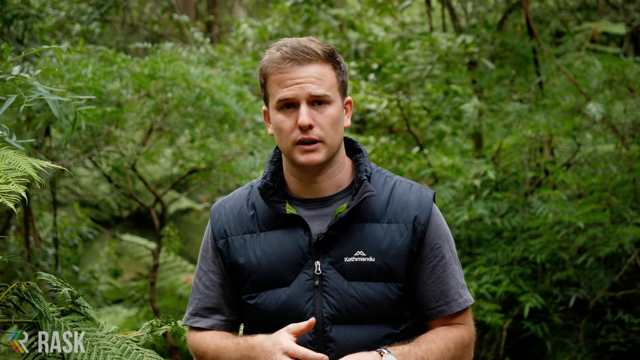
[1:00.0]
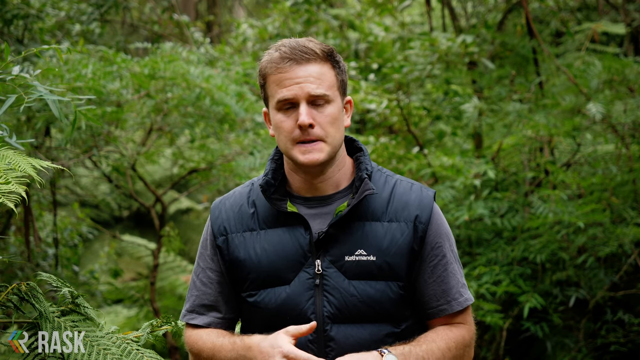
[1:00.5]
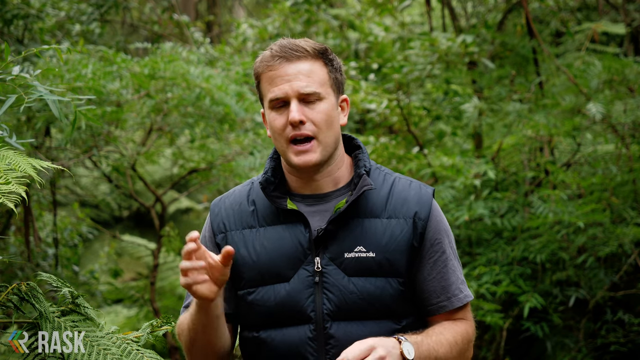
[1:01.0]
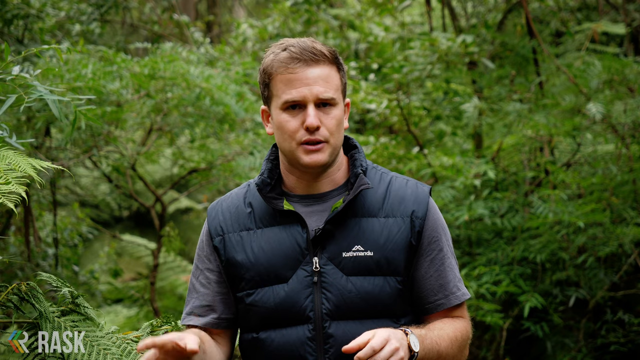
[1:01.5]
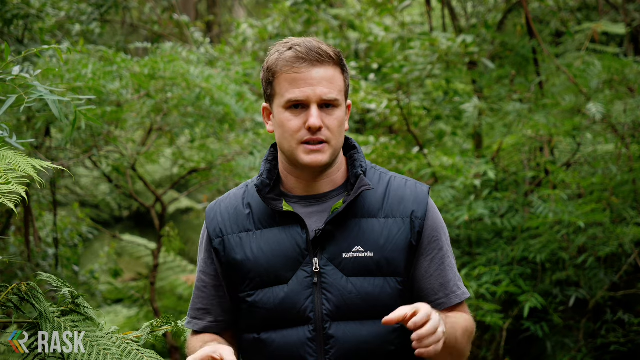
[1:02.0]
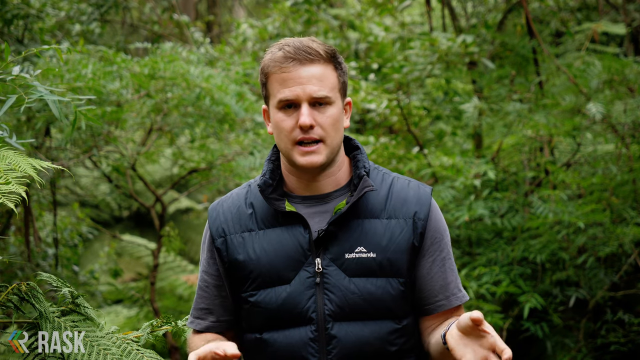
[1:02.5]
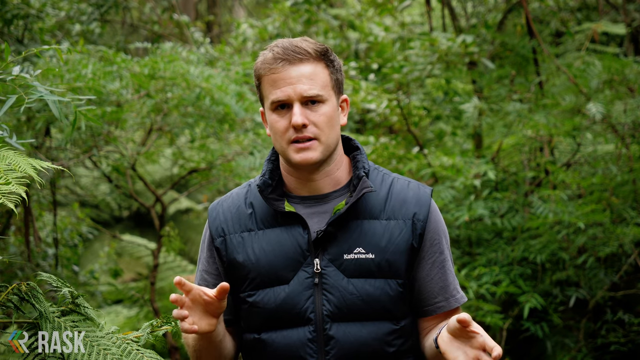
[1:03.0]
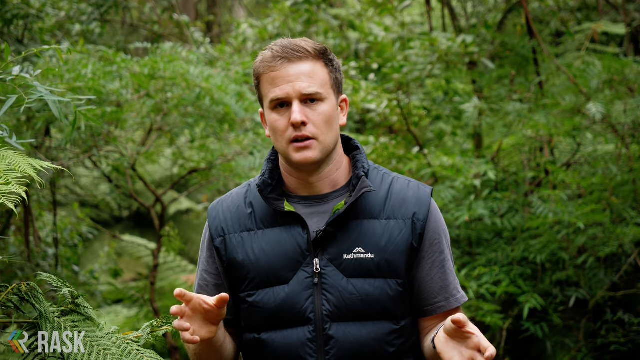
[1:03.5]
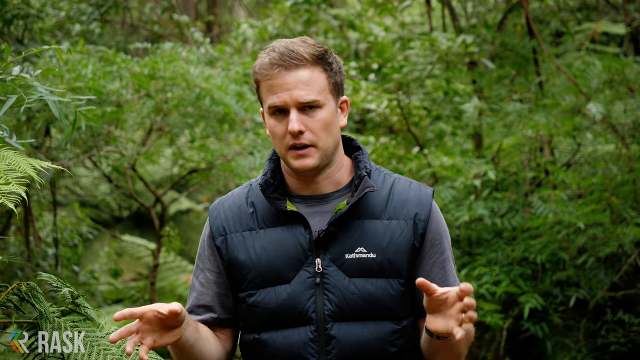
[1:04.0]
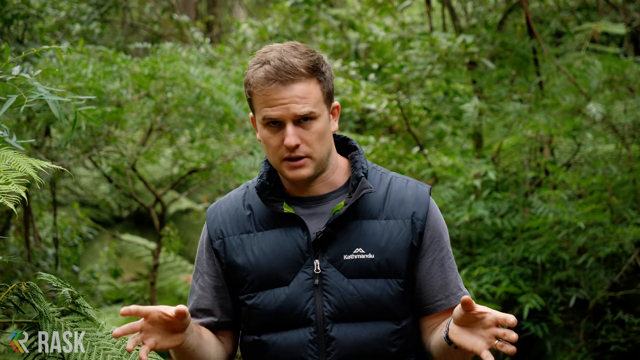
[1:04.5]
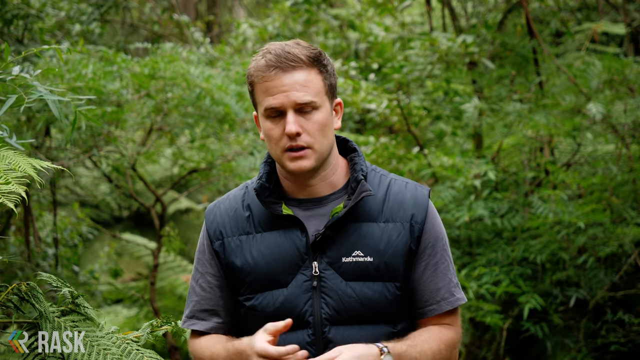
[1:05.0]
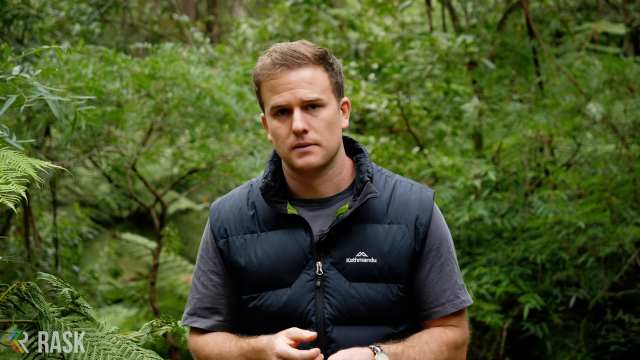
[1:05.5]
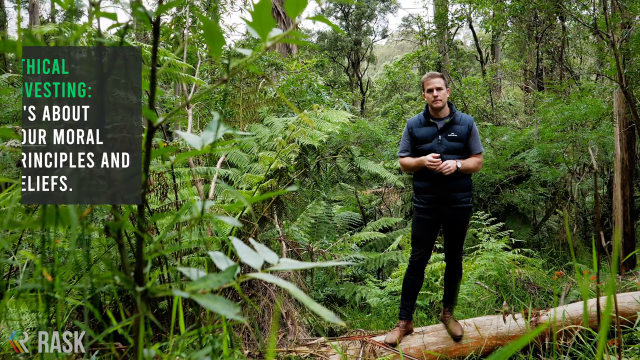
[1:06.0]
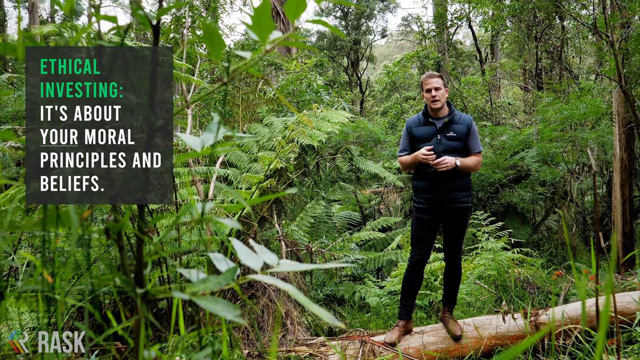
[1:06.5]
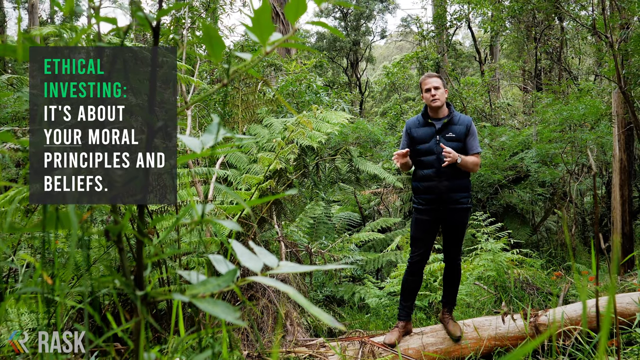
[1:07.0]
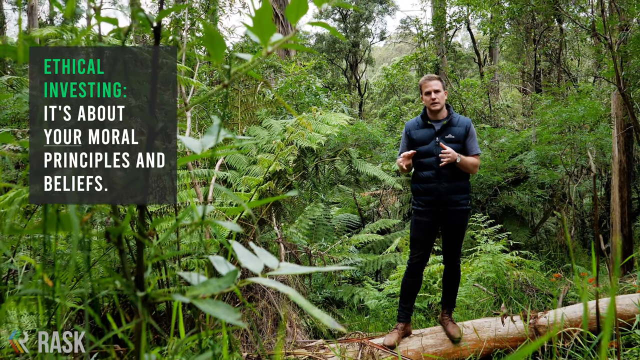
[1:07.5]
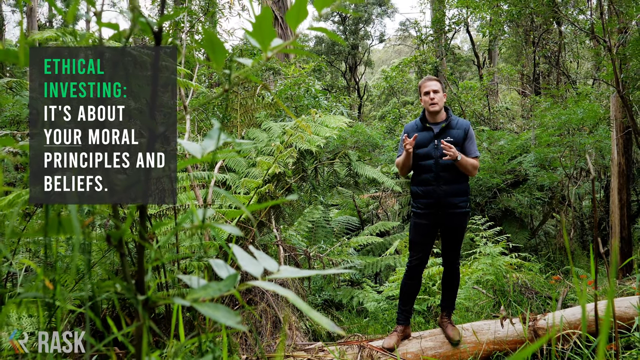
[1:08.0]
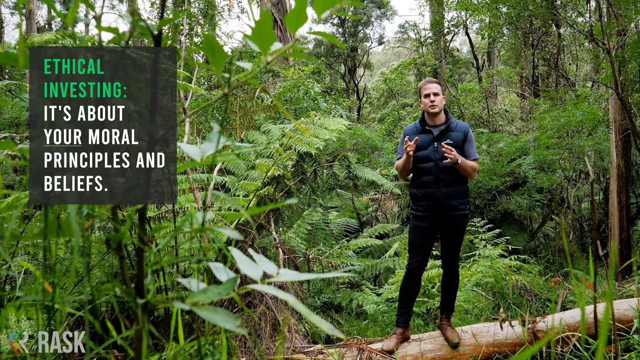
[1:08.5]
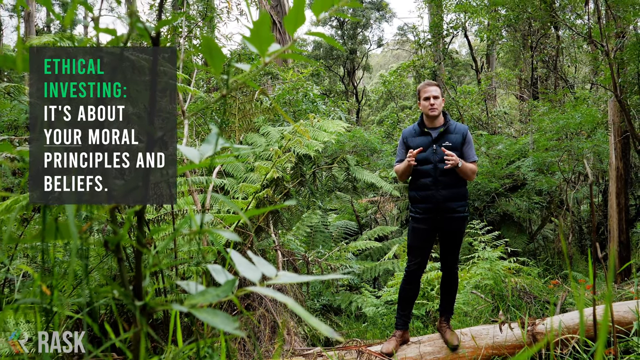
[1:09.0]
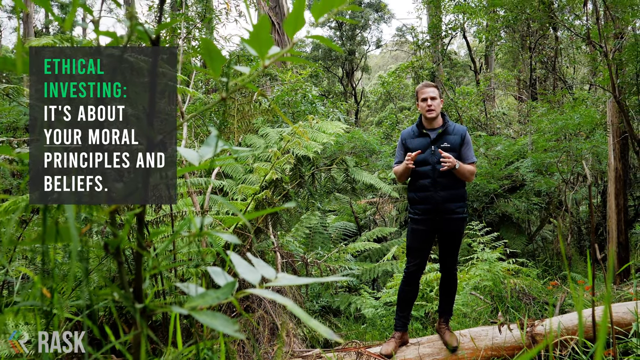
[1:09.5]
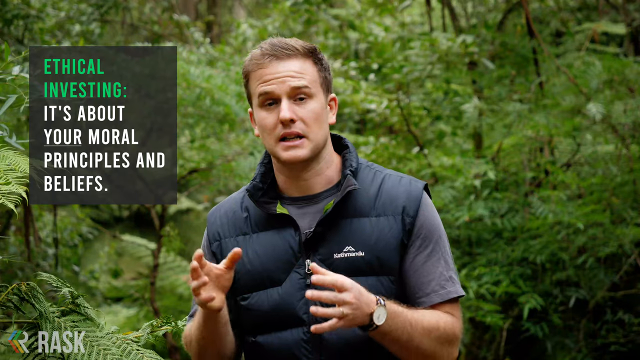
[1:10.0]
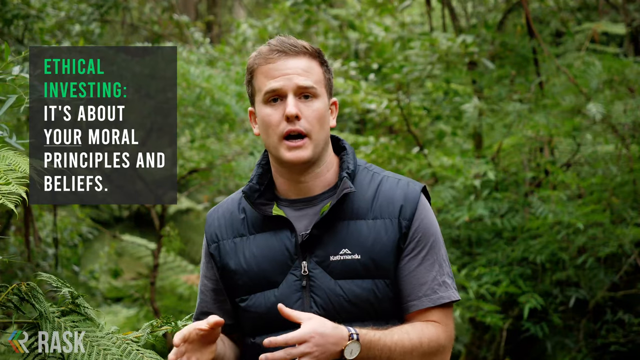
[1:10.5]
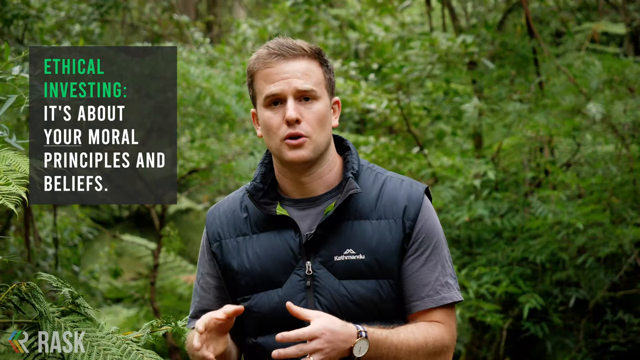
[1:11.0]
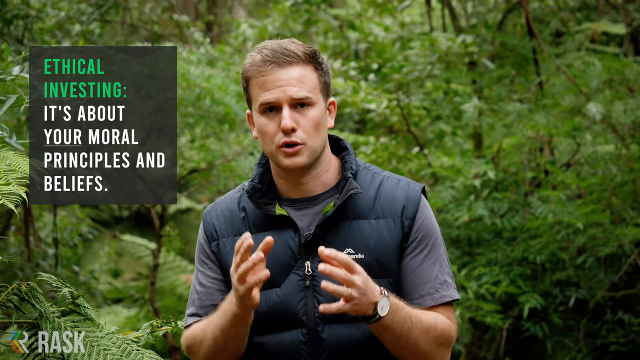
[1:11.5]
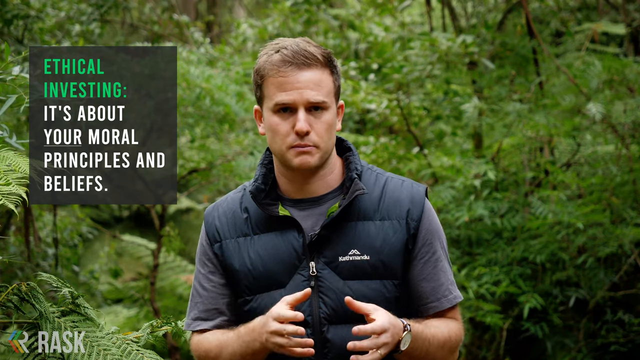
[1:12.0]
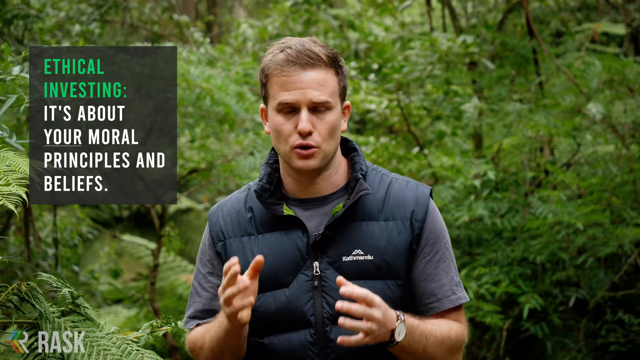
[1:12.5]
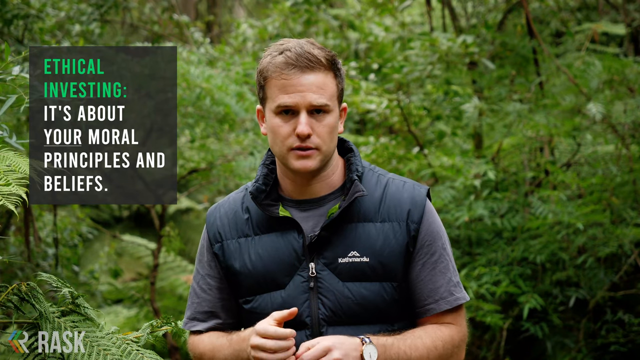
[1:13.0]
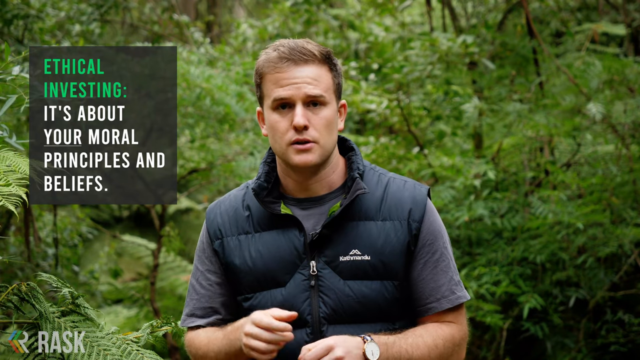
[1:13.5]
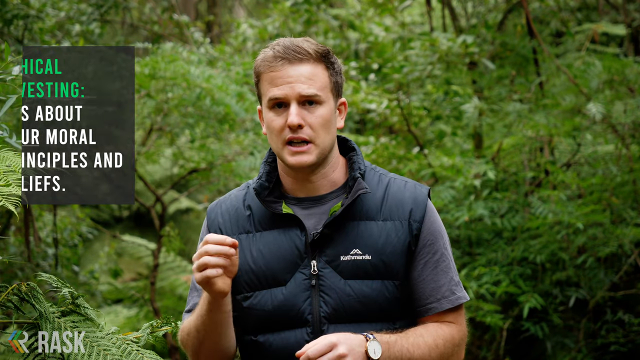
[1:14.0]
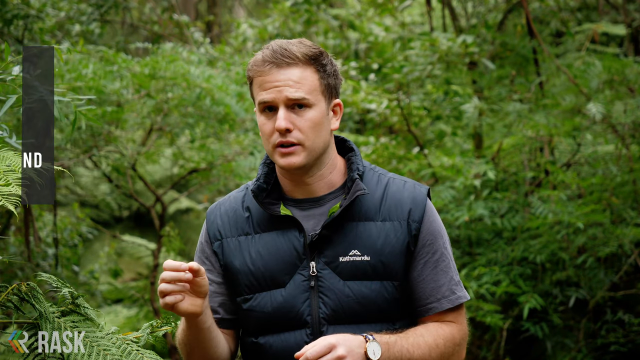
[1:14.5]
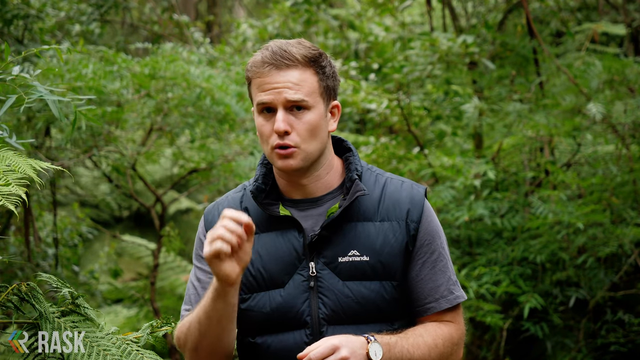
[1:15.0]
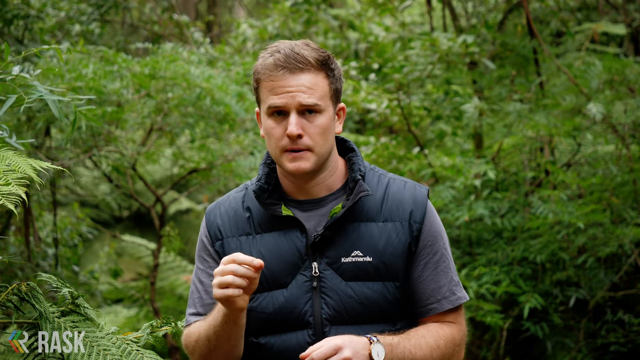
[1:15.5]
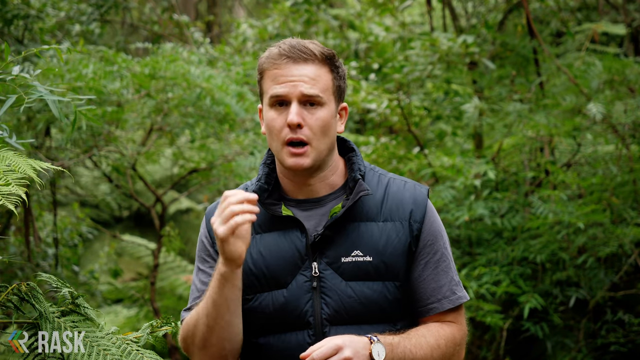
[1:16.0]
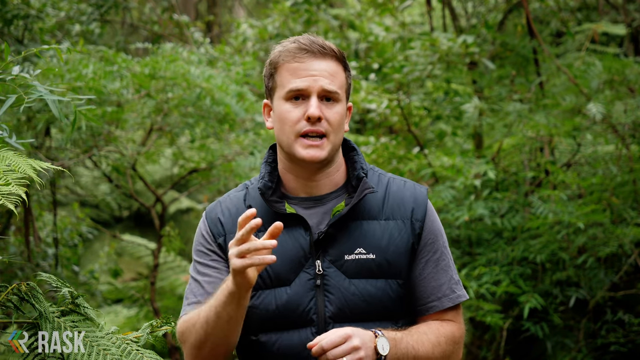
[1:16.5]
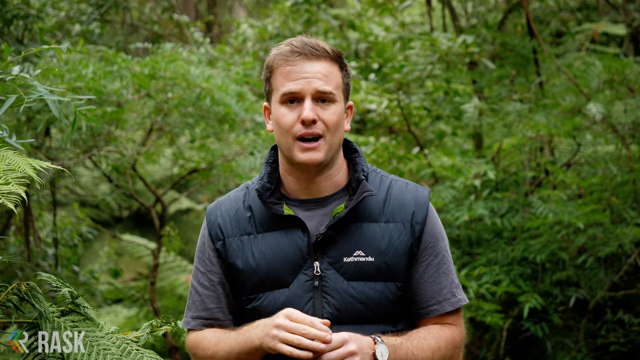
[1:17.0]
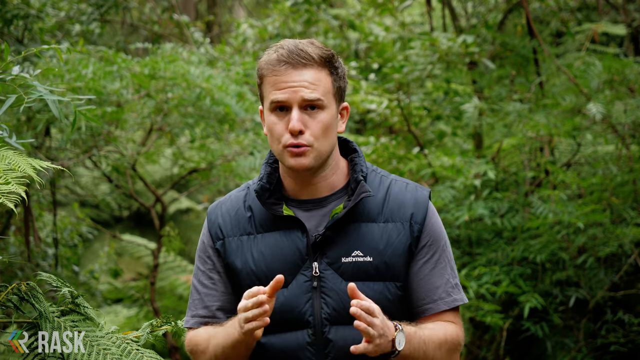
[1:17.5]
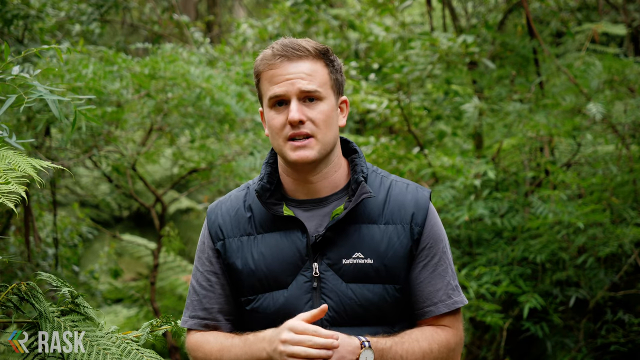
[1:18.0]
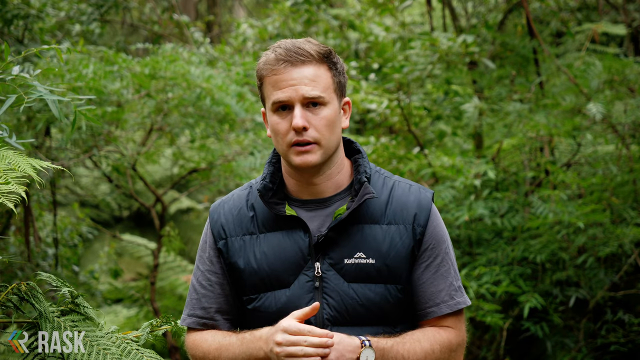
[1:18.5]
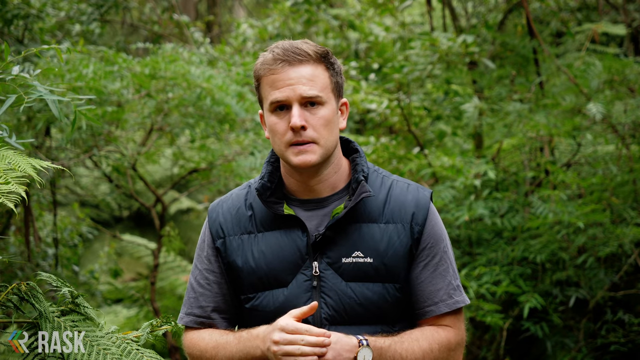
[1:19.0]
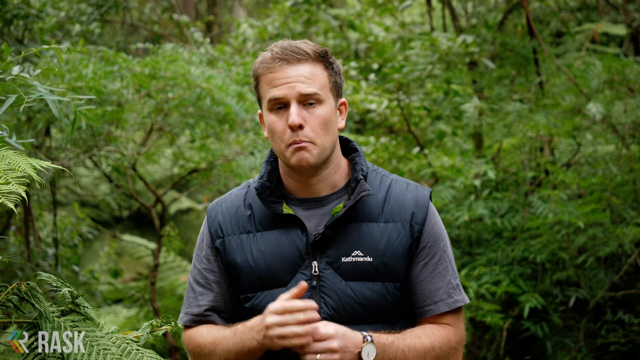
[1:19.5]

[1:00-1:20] Still in the bush, the man uses both hands as he explains. A full view of him shows he is wearing black trousers and standing on a log of wood that had fallen. He is in the middle of the bush with lots of flowers and different trees. A note on the screen about ethical investment states that it is all about moral principles and belief.